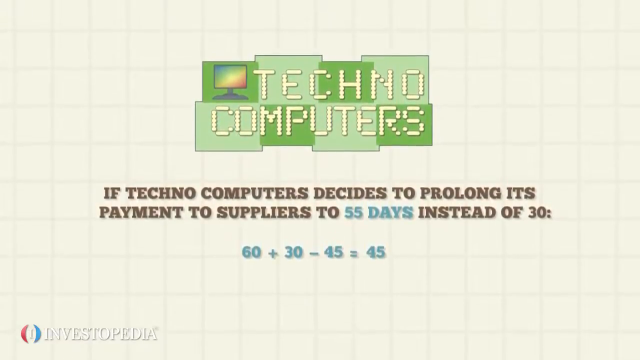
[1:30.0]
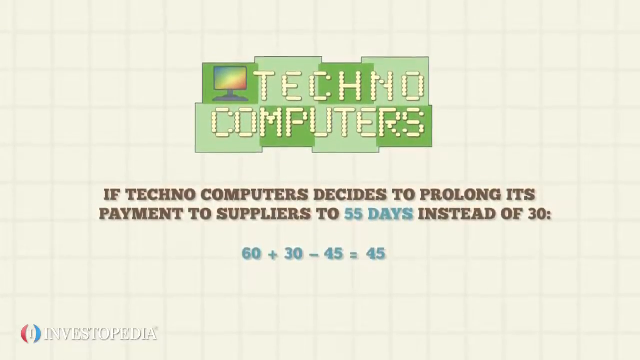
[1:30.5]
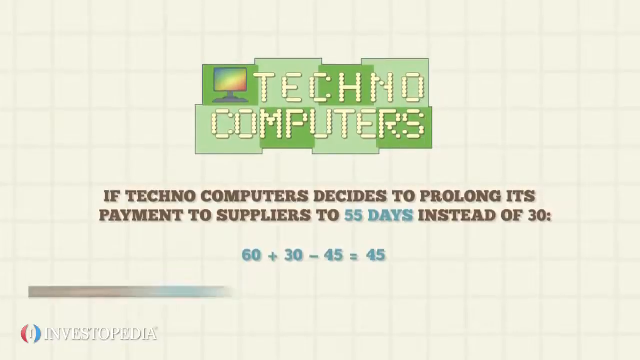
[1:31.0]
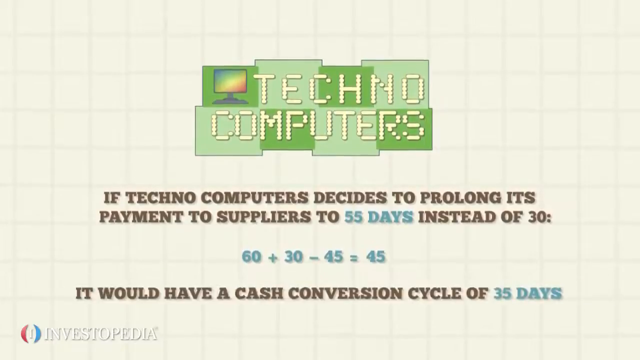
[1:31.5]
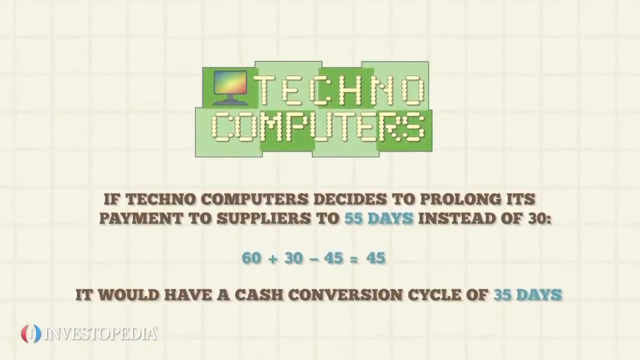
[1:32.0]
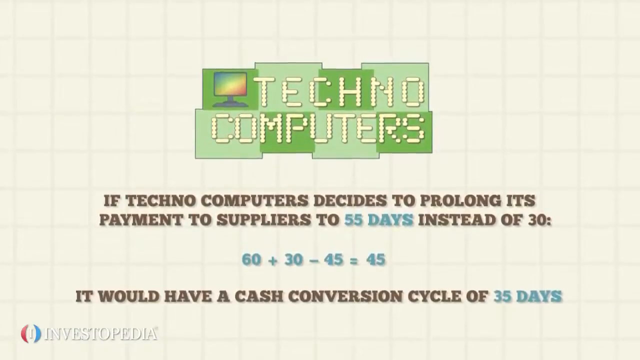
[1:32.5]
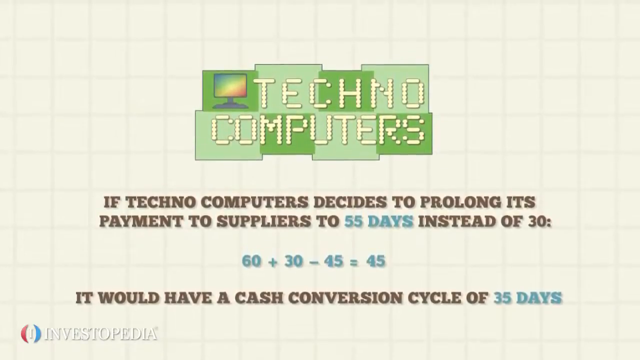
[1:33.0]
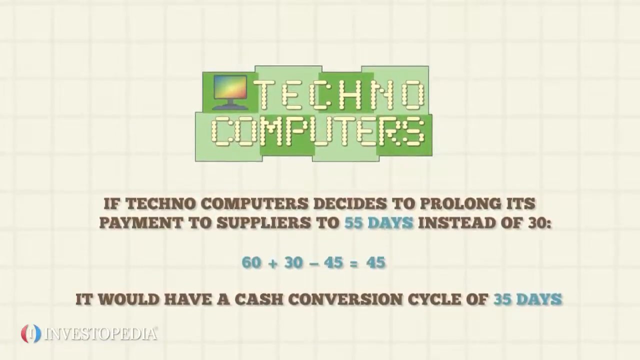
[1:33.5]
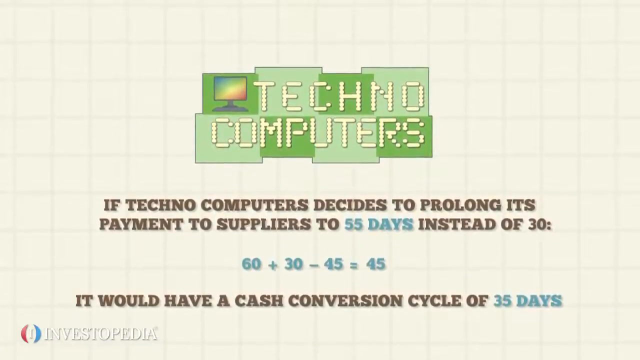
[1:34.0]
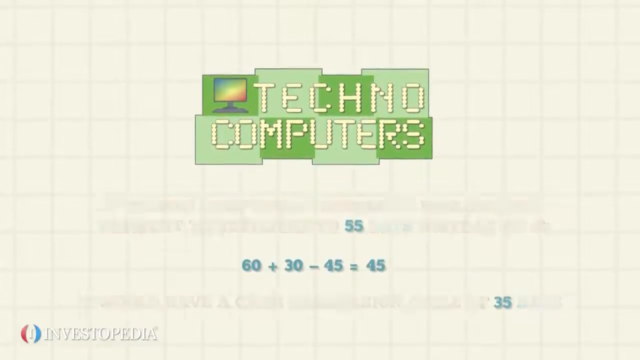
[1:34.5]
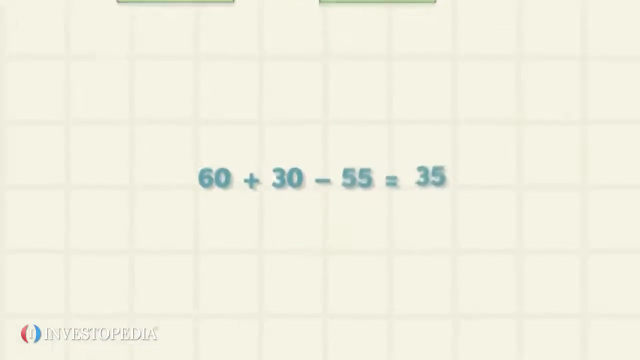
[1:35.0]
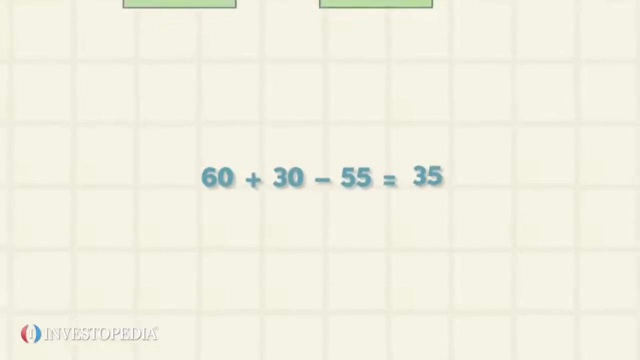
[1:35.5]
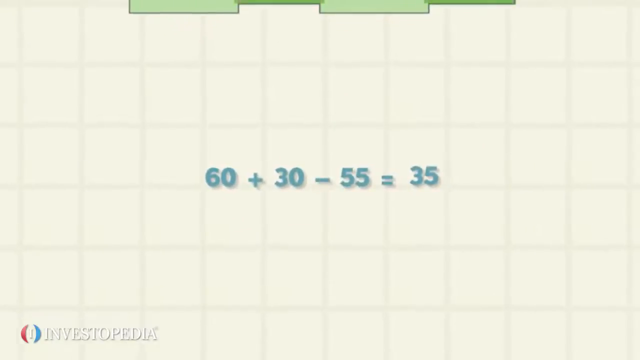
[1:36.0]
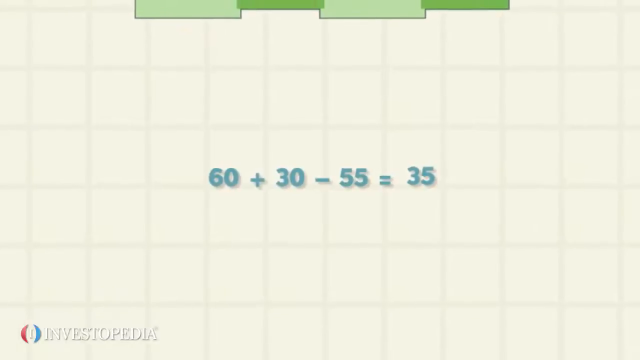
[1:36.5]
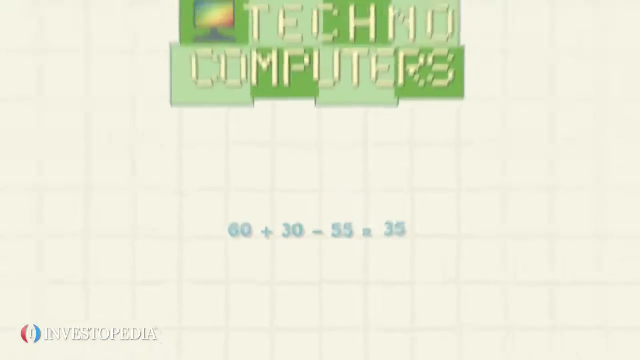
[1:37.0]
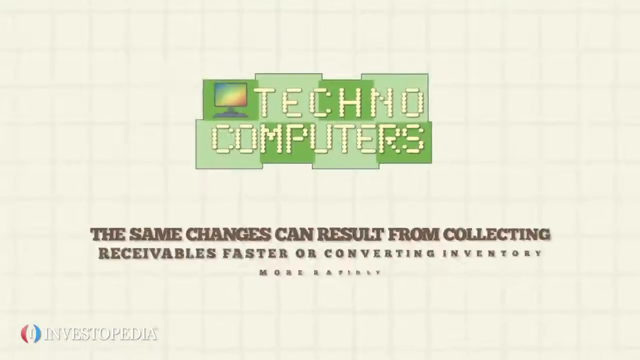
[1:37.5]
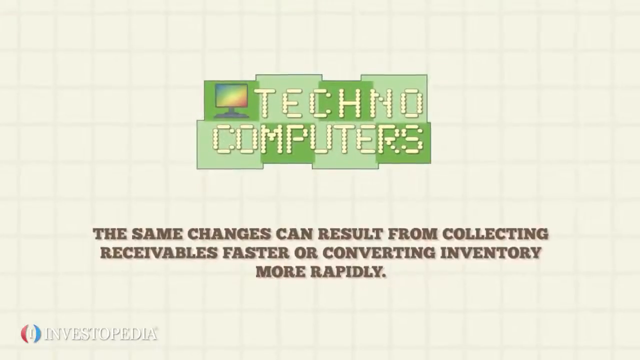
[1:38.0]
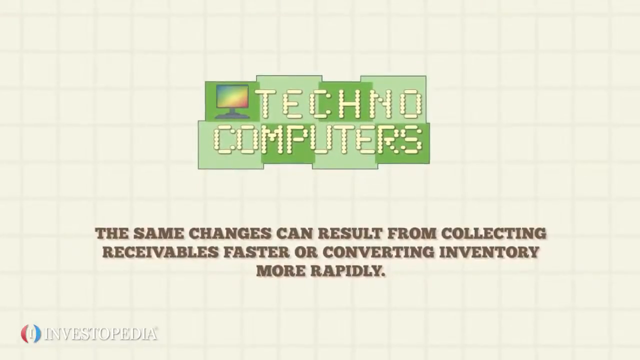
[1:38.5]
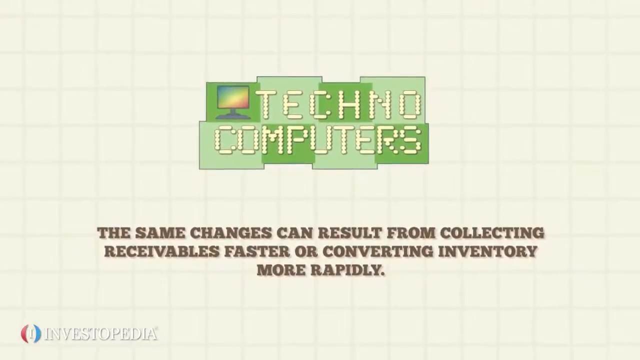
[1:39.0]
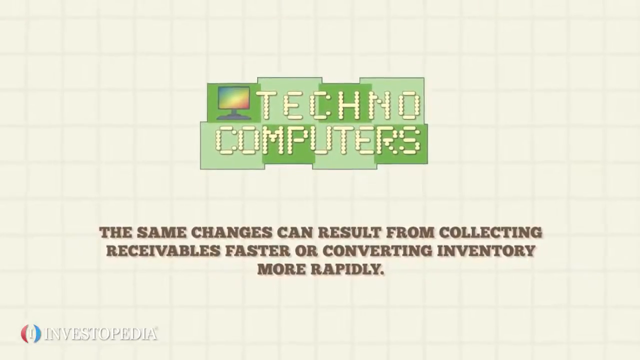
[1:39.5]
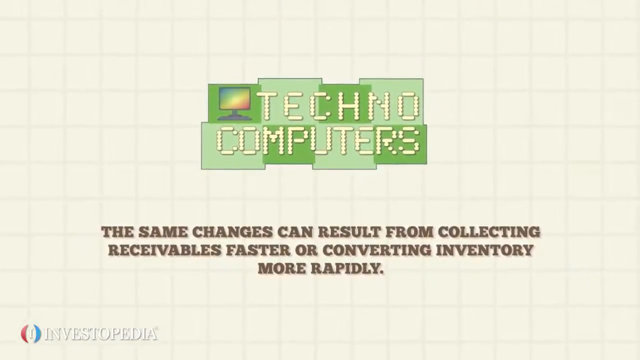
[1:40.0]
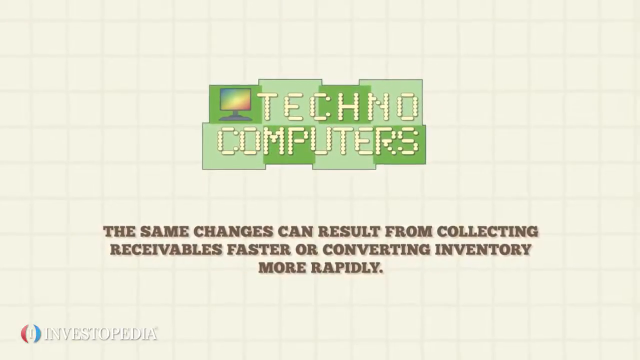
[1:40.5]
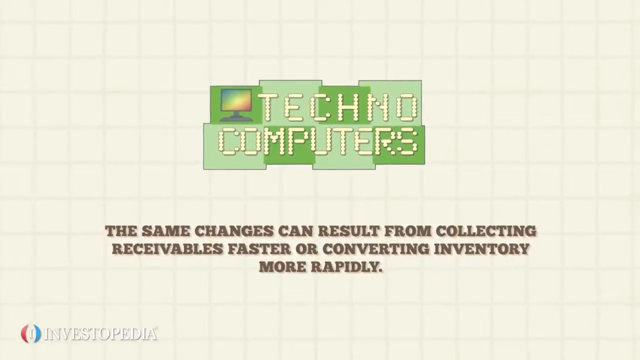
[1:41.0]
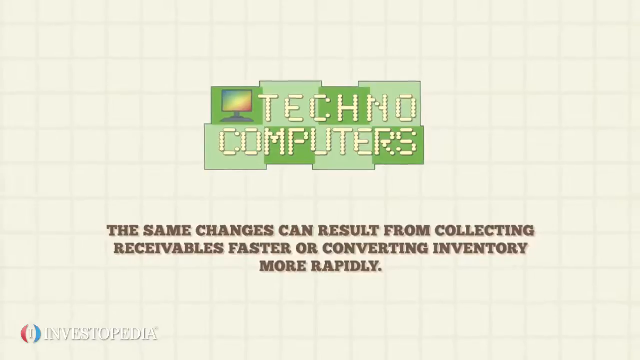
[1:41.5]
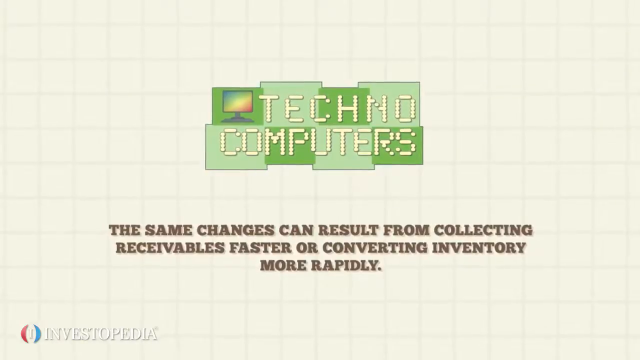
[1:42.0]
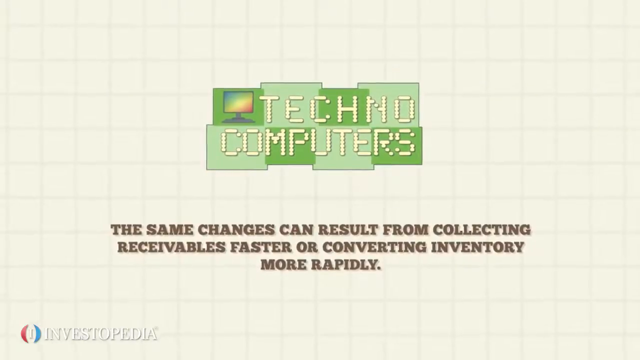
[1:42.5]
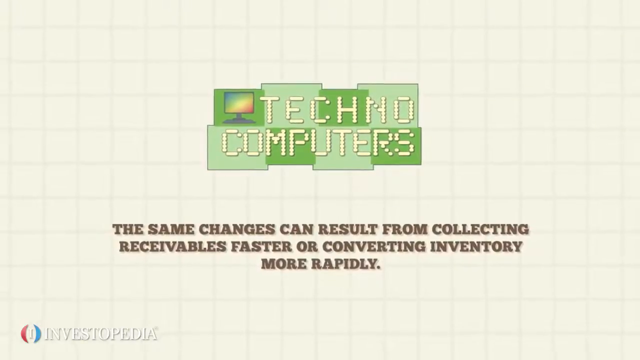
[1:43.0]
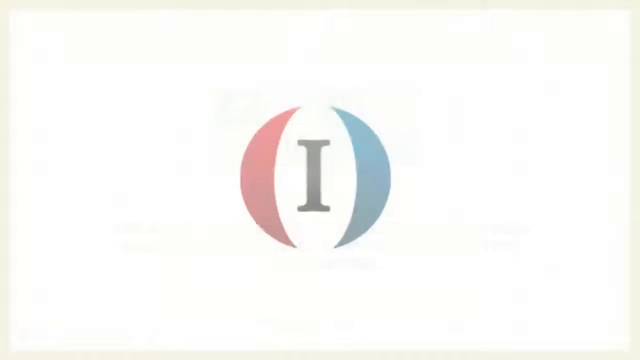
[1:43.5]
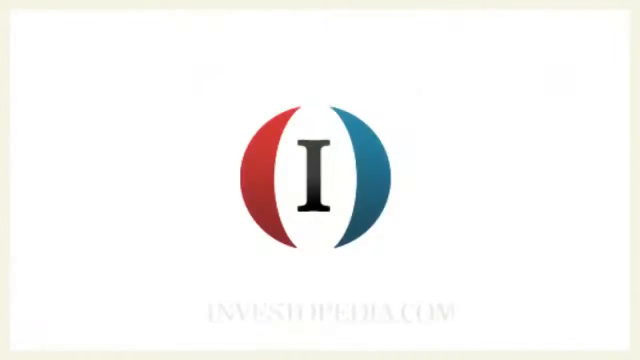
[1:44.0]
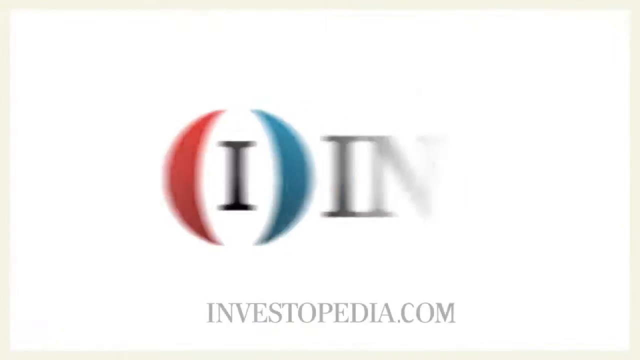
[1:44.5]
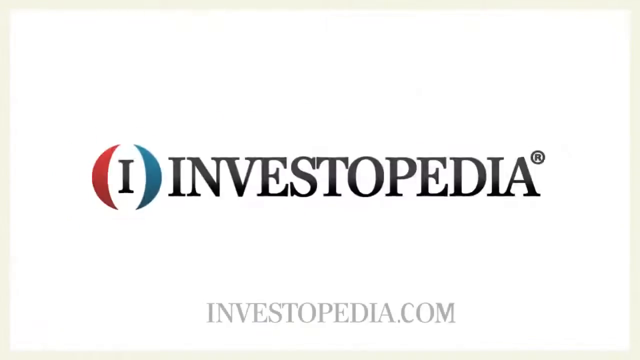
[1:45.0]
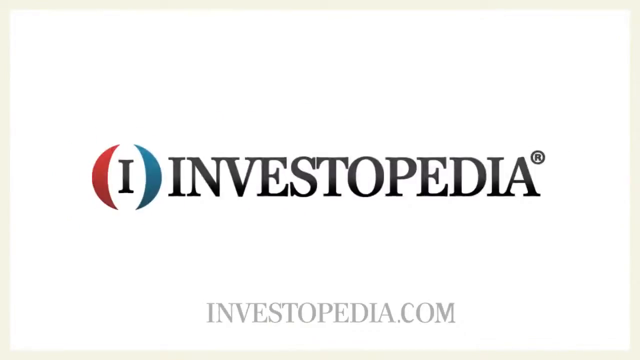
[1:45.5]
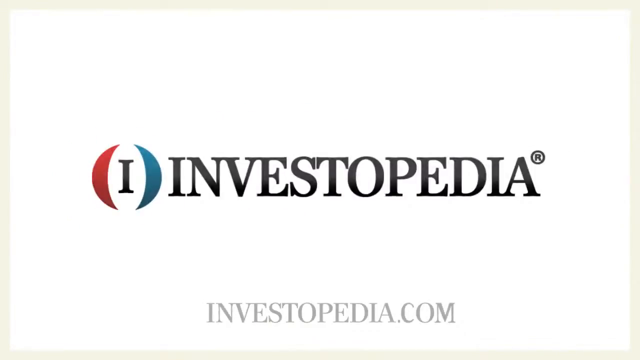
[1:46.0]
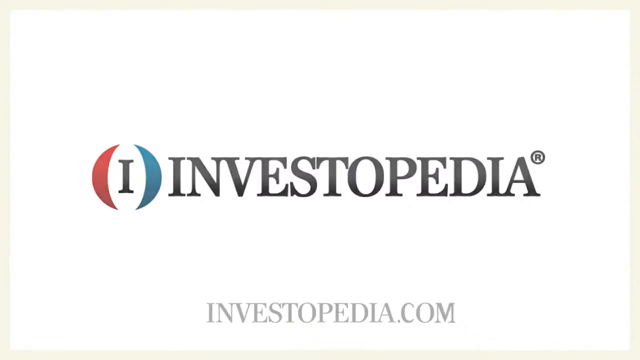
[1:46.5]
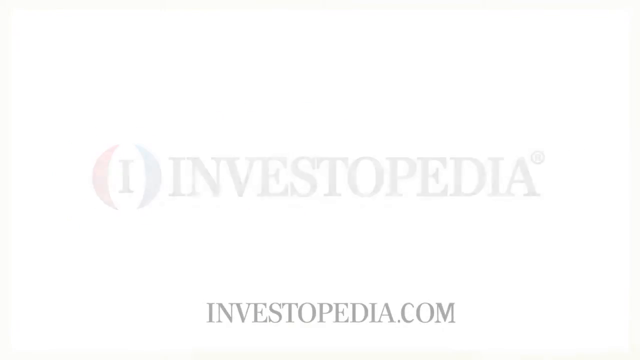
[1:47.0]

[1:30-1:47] Information moves from the left-hand side to the right-hand side until it reaches the middle of the page, and information appears with 35 days written in blue font. In another edited shift, numbers appear reading 60 plus 30 minus 55 equals 35, written in blue. The numbers then disappear as if falling into something. Information appears in brown capital letters, and the view zooms out. The red and blue logo with an eye in the middle appears first, then "Investopedia" appears in an edited style, with "investopedia.com" below it, all on a white background. The logo and "Investopedia" then disappear as if falling into something.